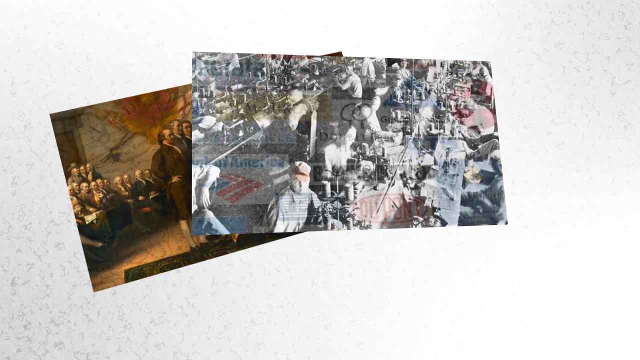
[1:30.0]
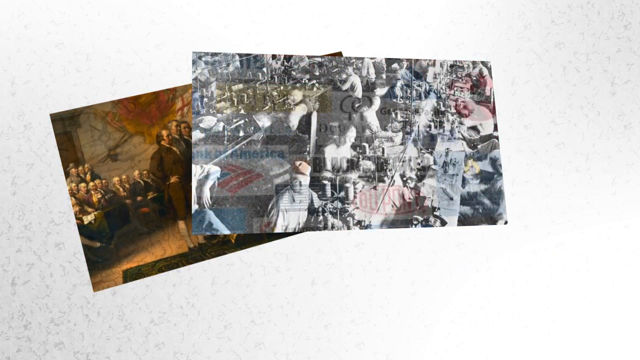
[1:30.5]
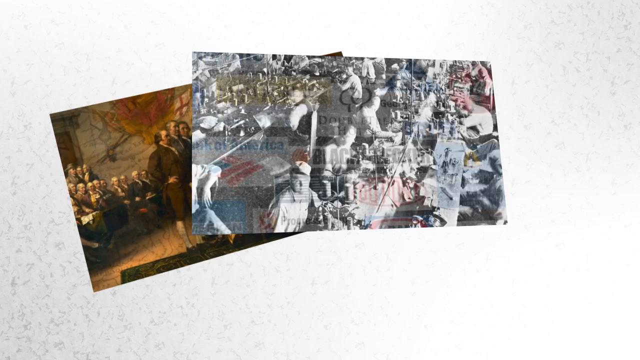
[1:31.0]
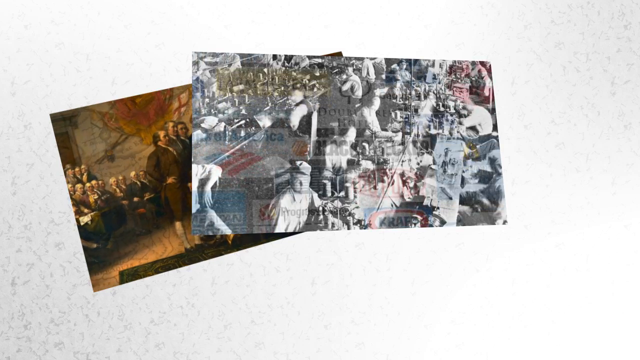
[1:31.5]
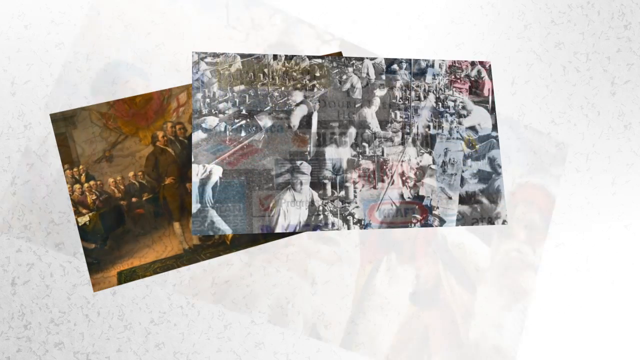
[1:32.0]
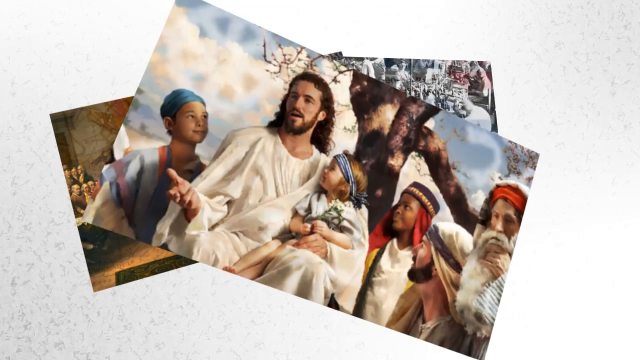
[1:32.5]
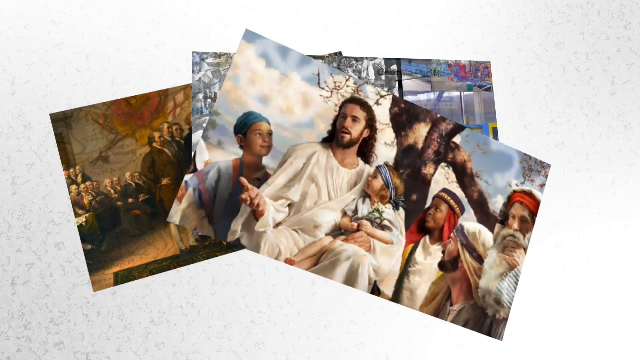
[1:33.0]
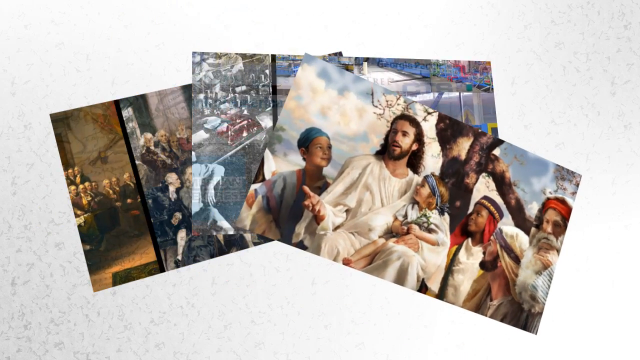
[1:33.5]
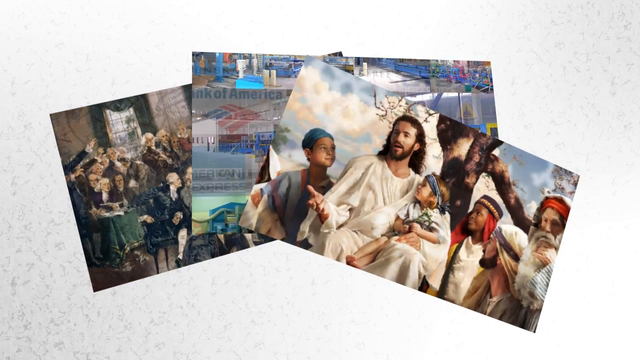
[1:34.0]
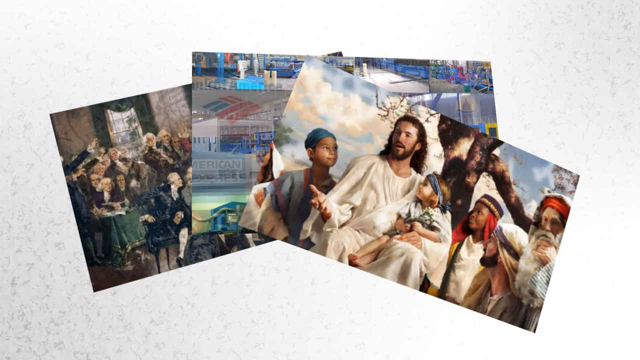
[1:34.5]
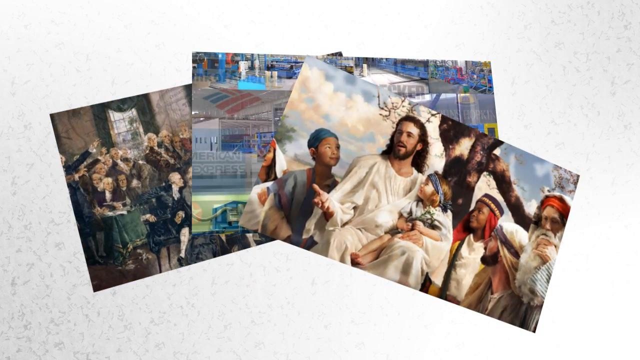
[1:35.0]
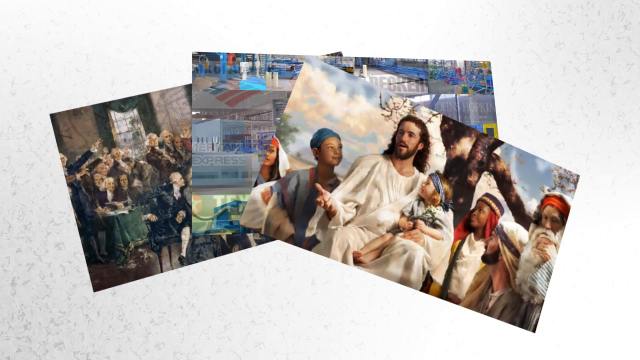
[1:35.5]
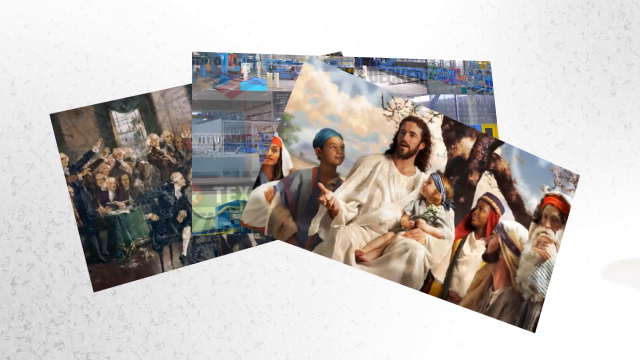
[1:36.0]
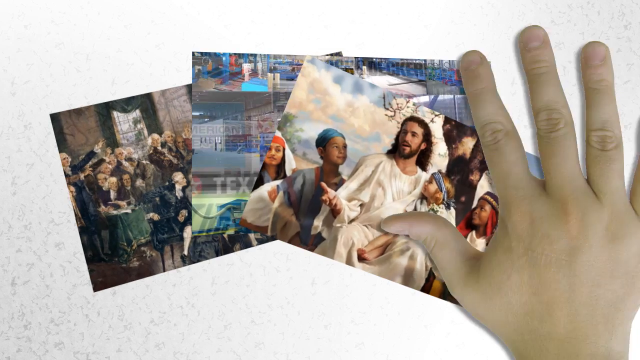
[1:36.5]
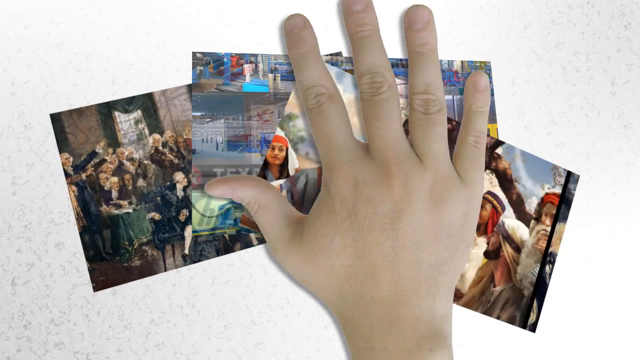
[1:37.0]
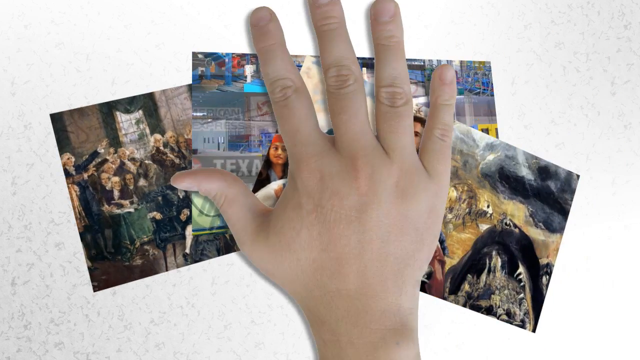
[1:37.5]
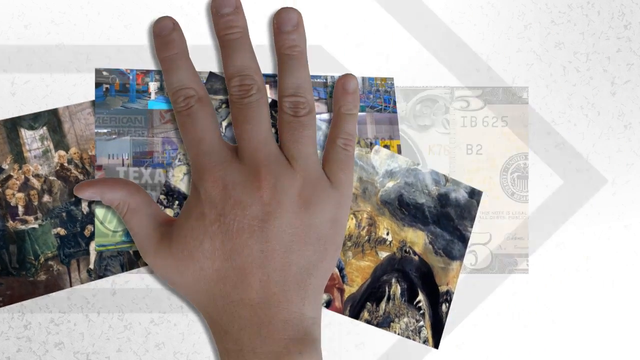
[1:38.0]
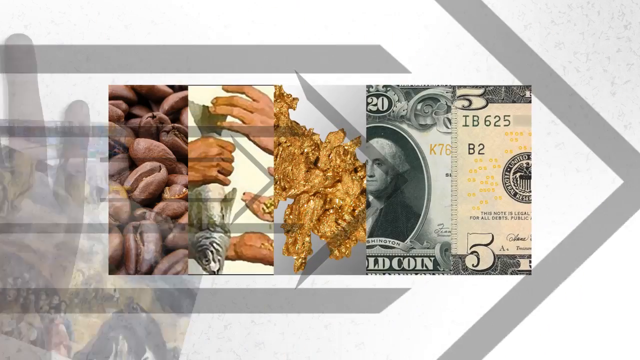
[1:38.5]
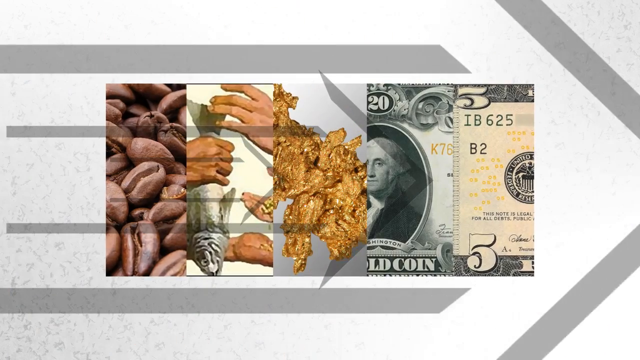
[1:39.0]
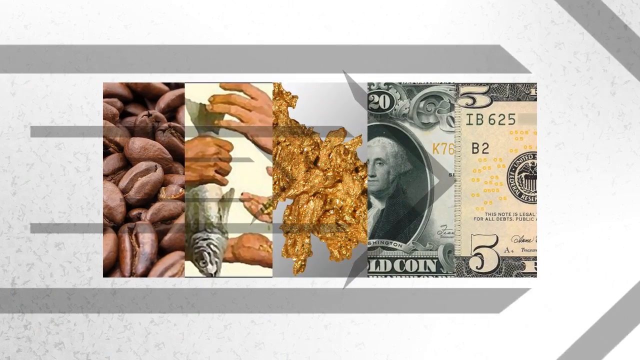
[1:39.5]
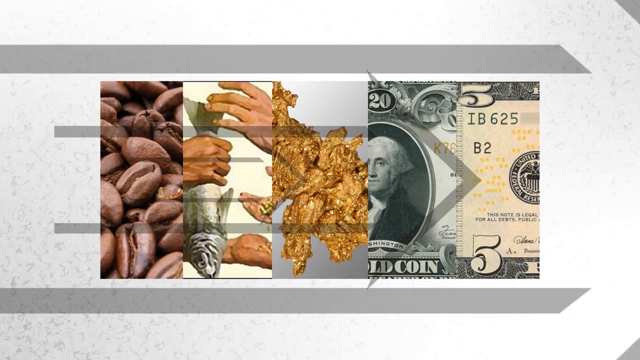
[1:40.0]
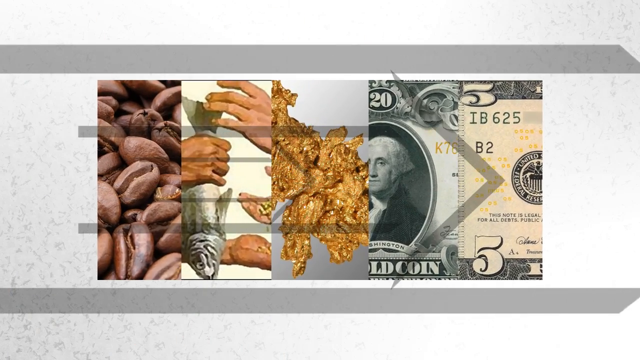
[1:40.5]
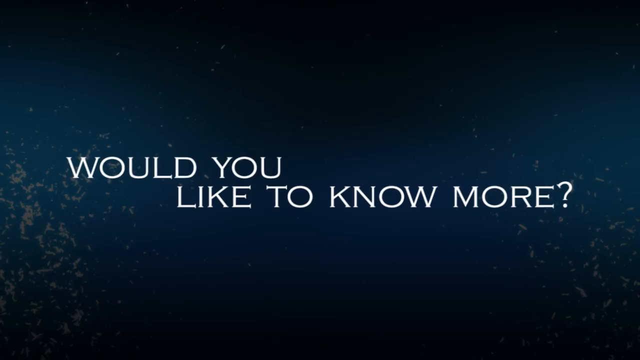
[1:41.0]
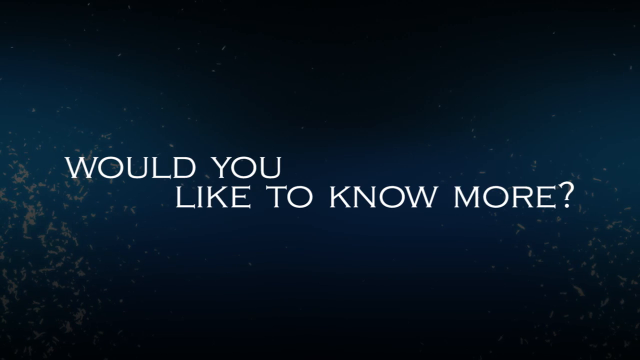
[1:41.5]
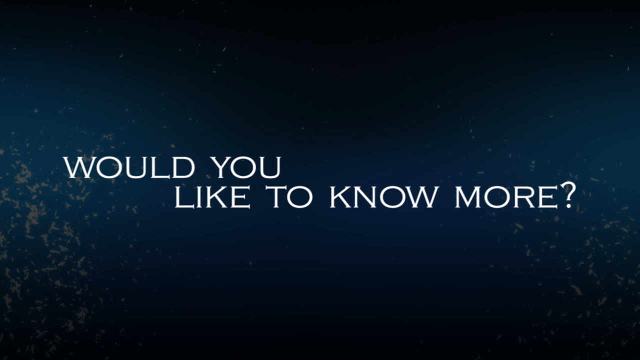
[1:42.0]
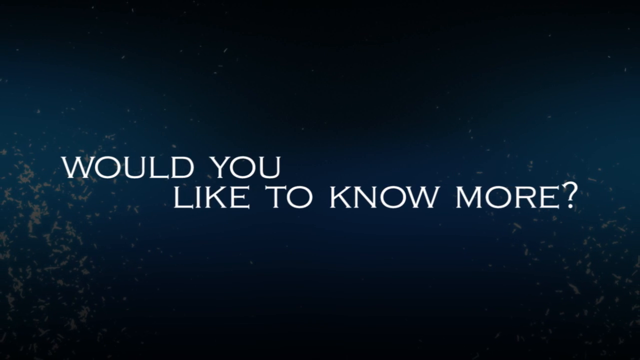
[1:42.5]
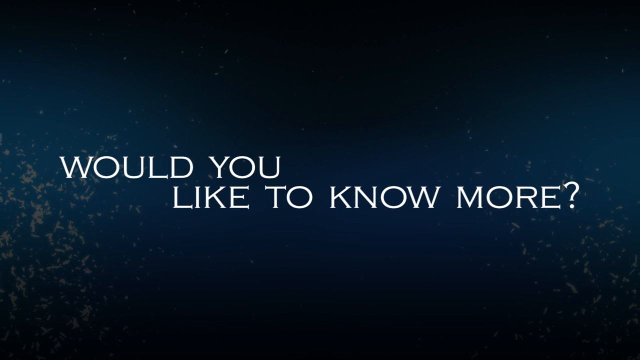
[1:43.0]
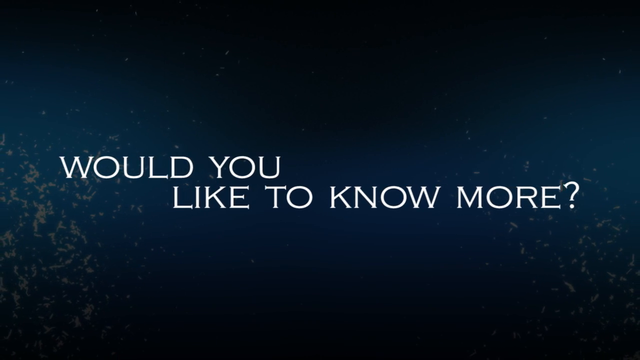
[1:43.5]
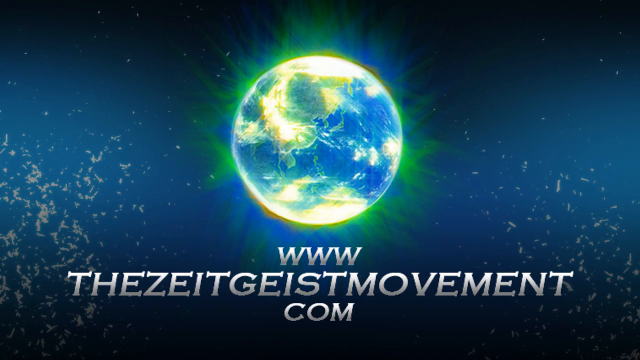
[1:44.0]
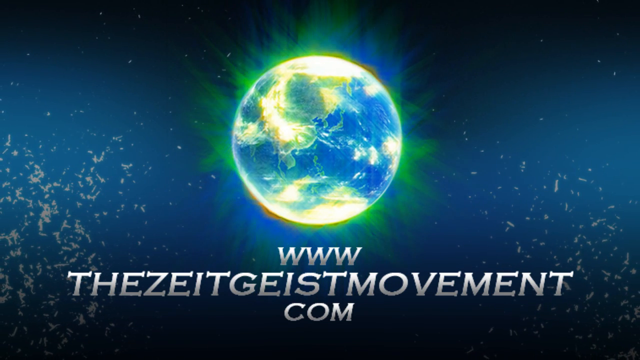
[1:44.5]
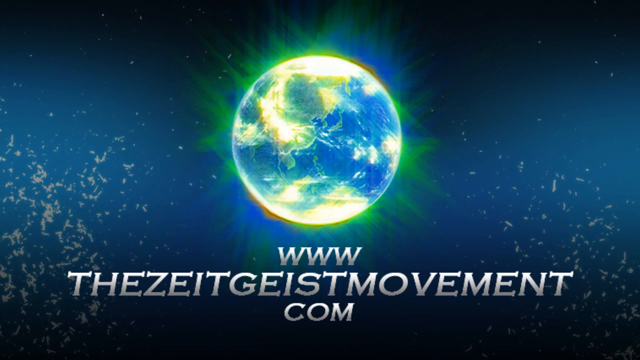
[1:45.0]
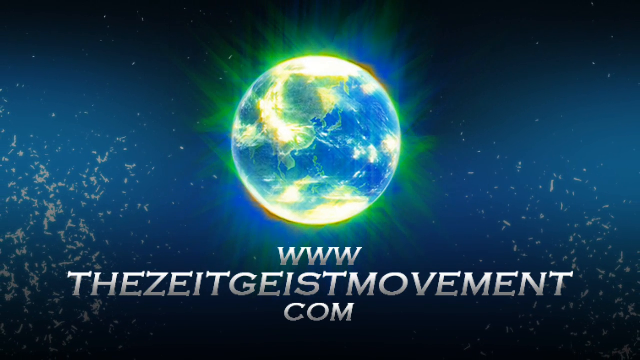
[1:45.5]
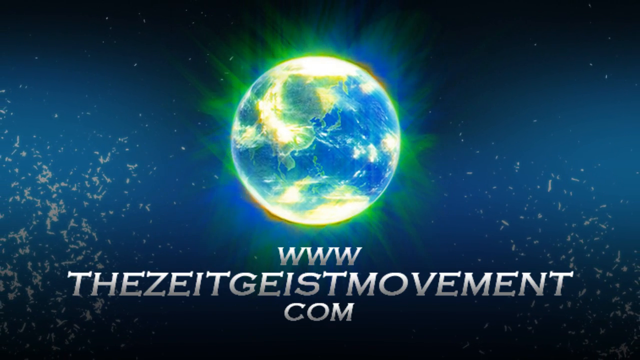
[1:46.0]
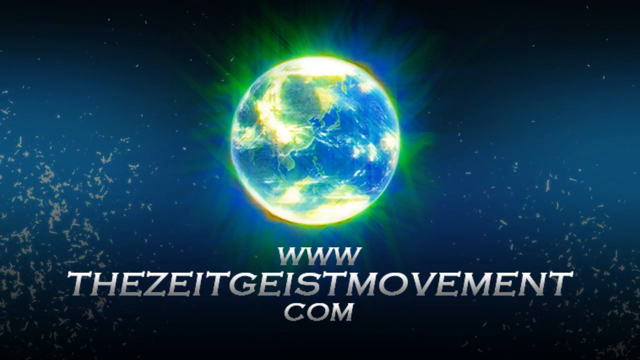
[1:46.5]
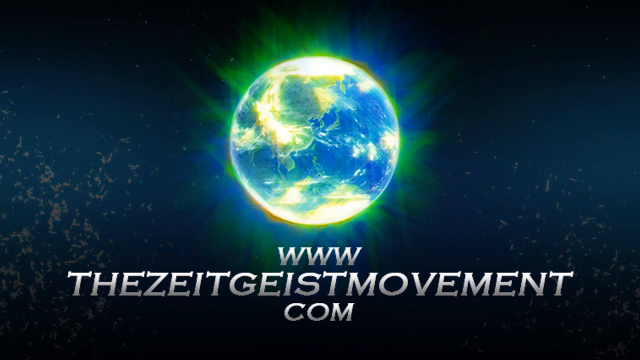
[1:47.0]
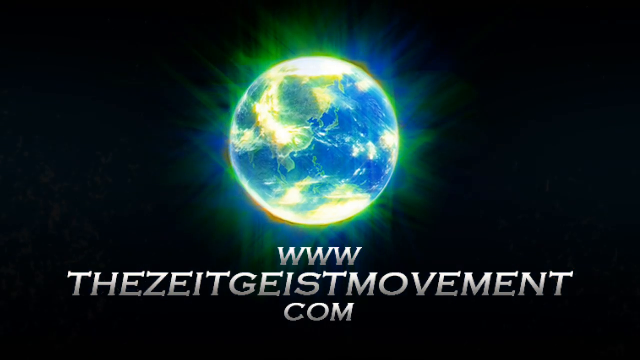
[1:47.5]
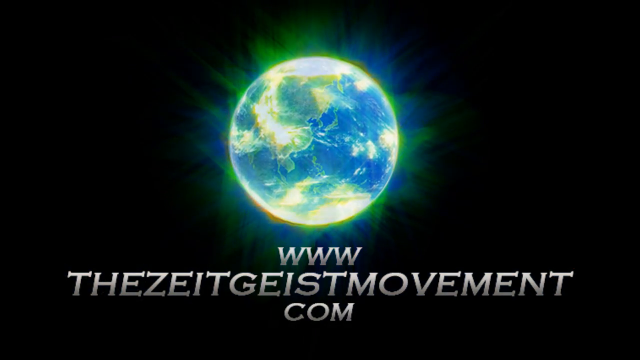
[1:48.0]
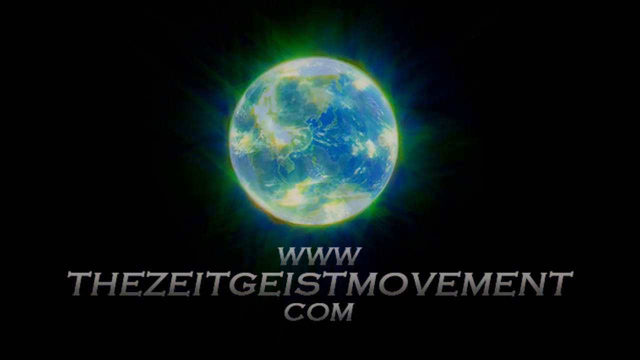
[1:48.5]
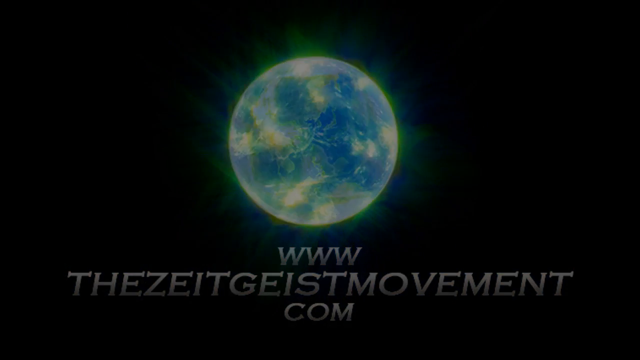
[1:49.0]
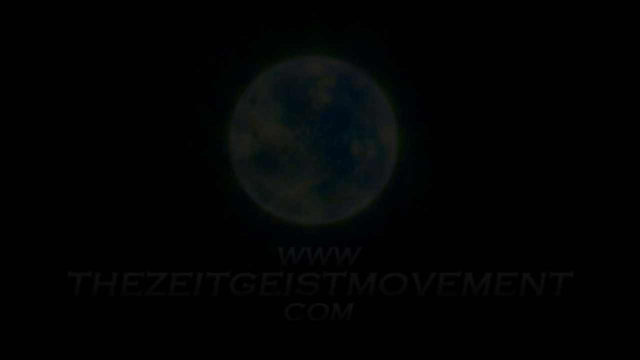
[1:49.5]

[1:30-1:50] Two pictures are shown: one from revolutionary times and a black-and-white one seemingly from the 1950s. A third appears, a picture of Jesus. Small vertical pictures follow, showing nuts and a five-dollar bill. Text on the screen then reads "would you like to know more?" with a question mark. The world appears lit up in vibrant blue, yellow and green, with the text "www.thezeitgeistmovement.com." Behind the earth is a sky with varying colors rather than a solid one. The world's lights begin to dim as it turns smaller and smaller, closes up and goes dark. The pictures placed one on top of the other then return.